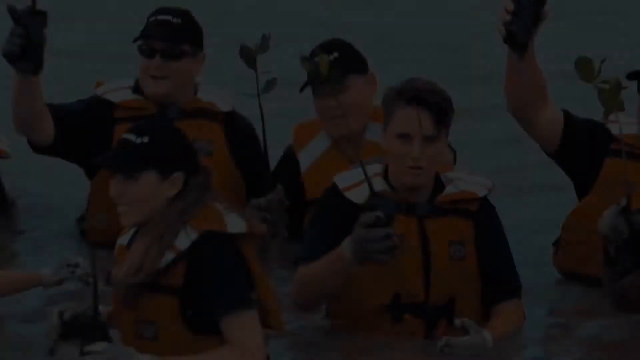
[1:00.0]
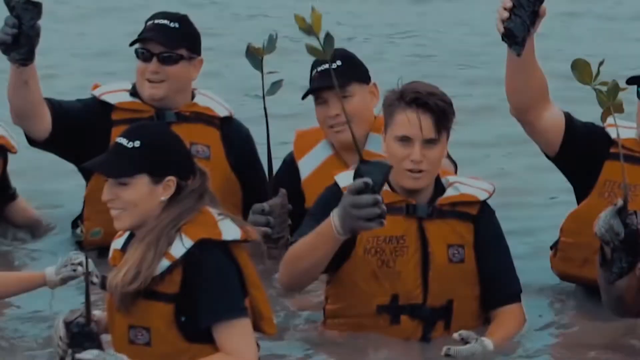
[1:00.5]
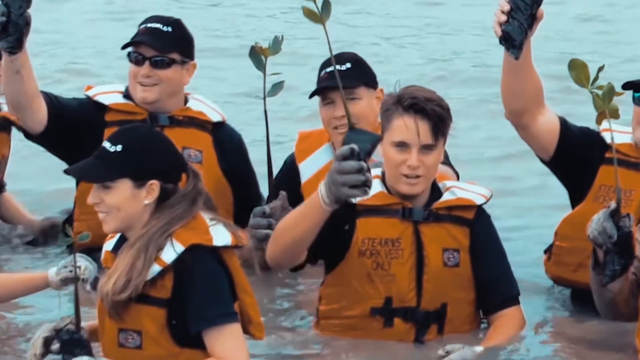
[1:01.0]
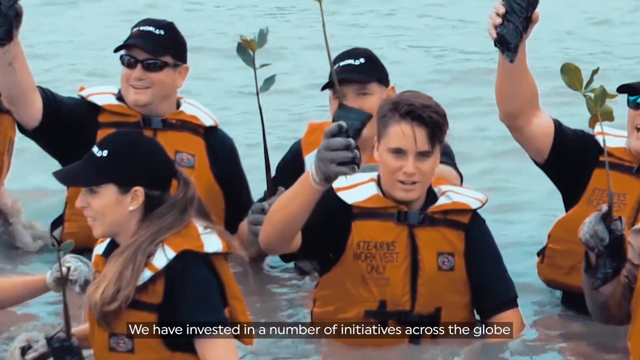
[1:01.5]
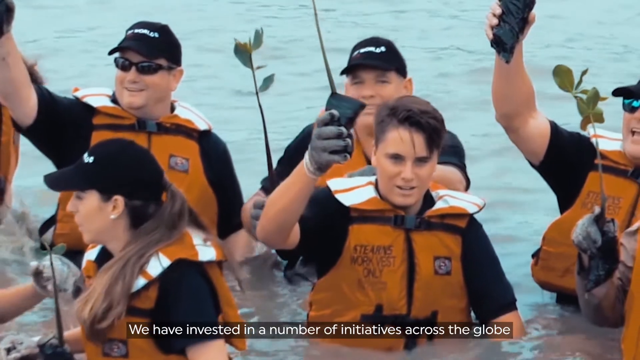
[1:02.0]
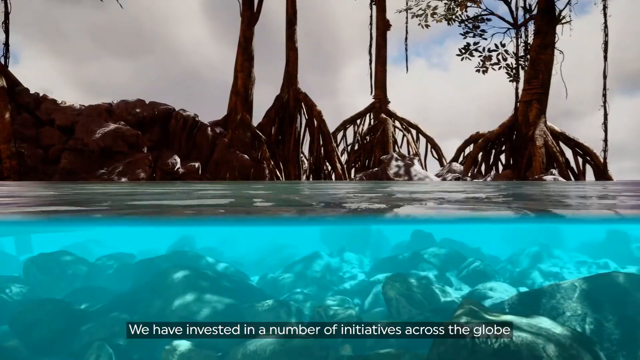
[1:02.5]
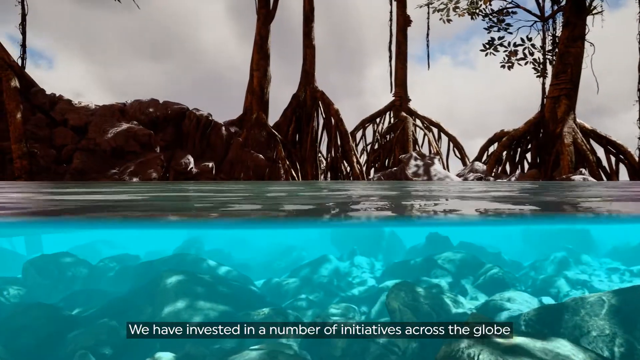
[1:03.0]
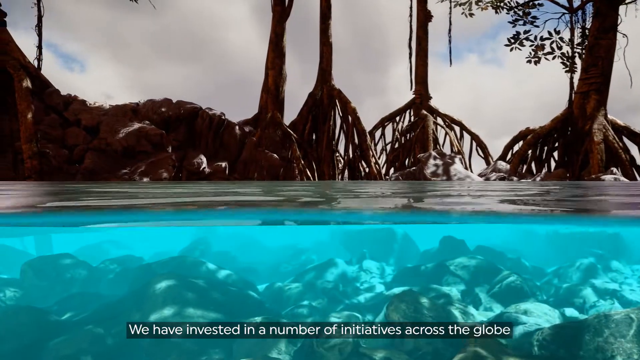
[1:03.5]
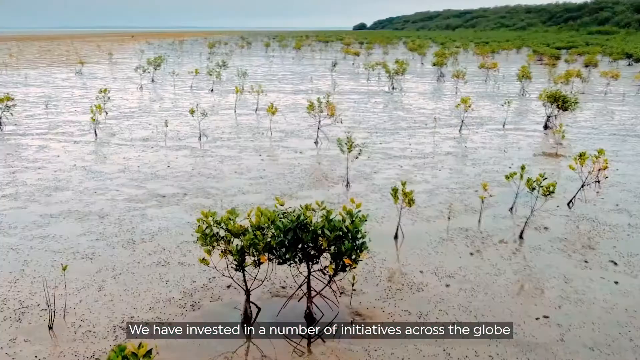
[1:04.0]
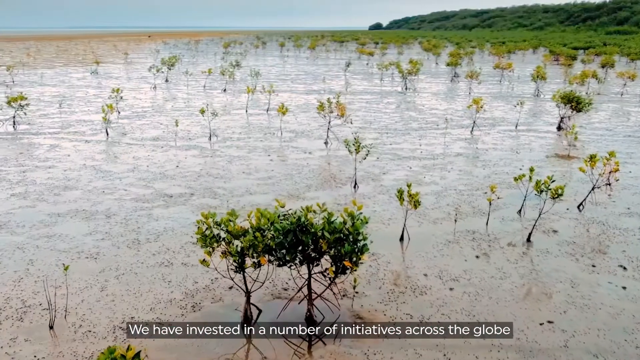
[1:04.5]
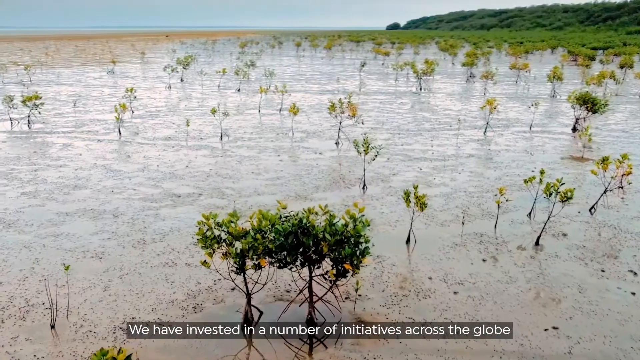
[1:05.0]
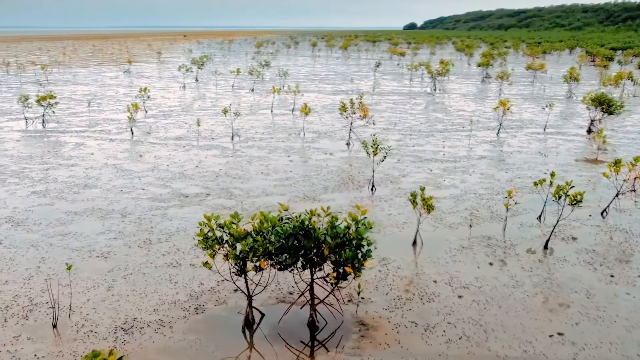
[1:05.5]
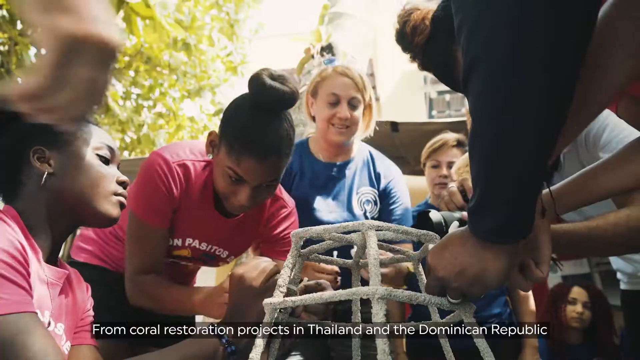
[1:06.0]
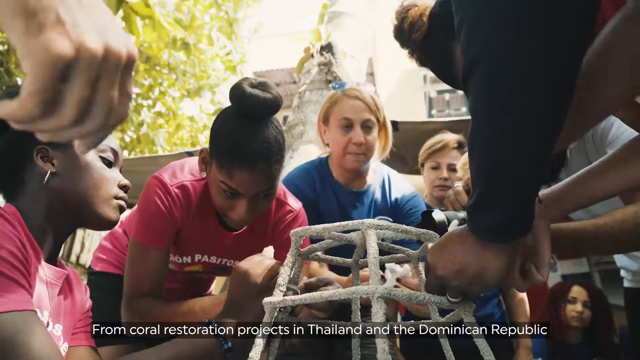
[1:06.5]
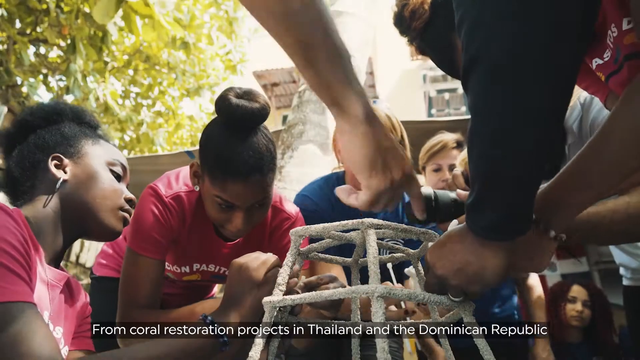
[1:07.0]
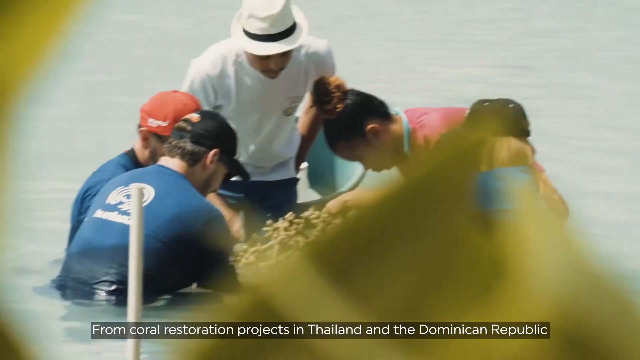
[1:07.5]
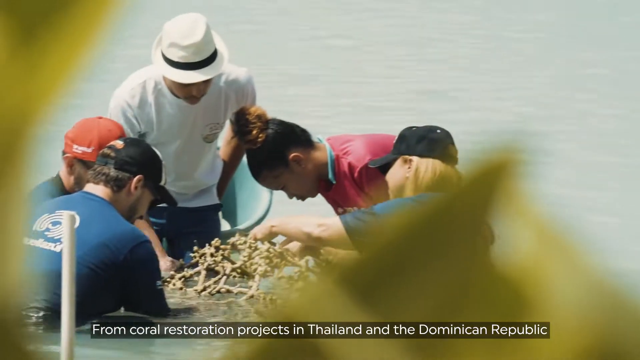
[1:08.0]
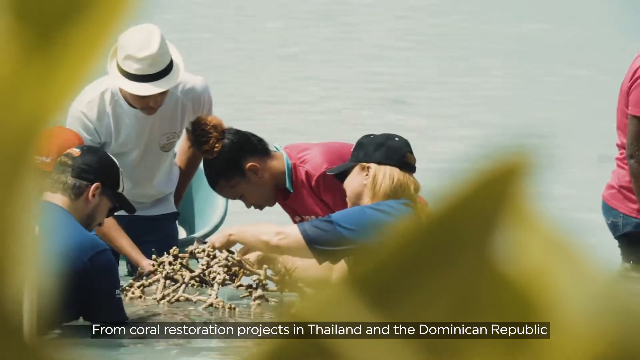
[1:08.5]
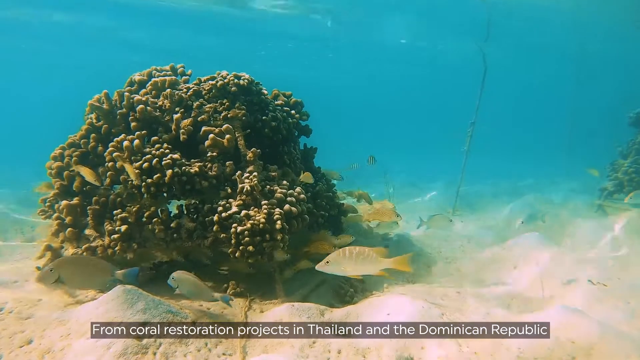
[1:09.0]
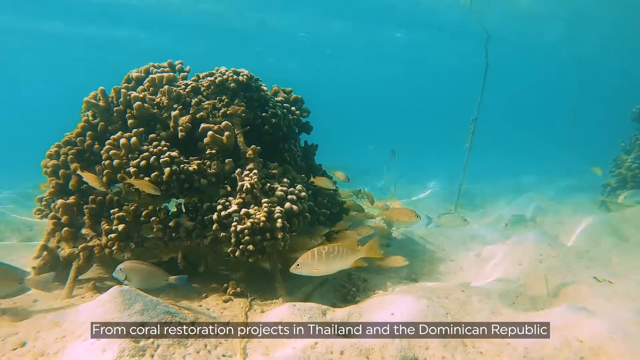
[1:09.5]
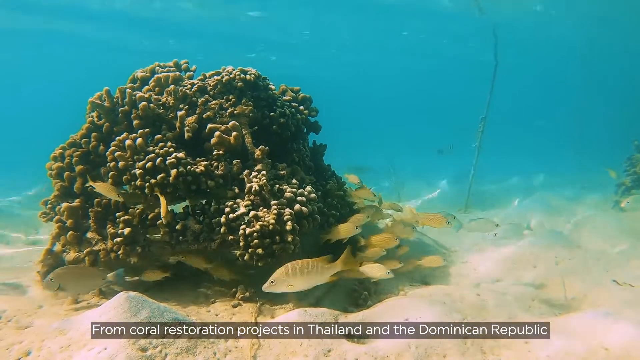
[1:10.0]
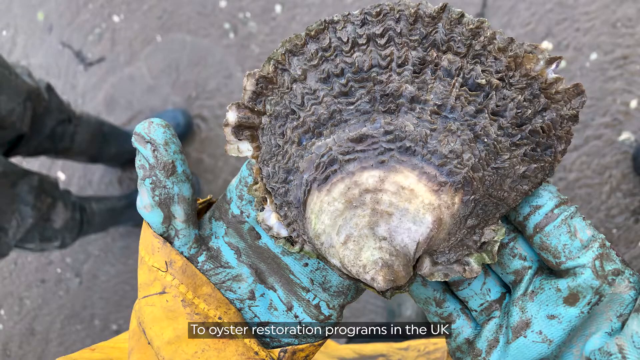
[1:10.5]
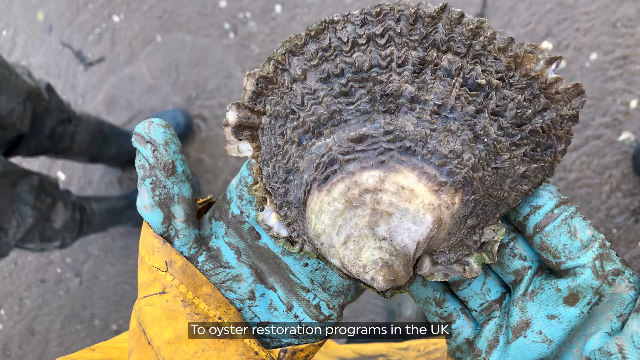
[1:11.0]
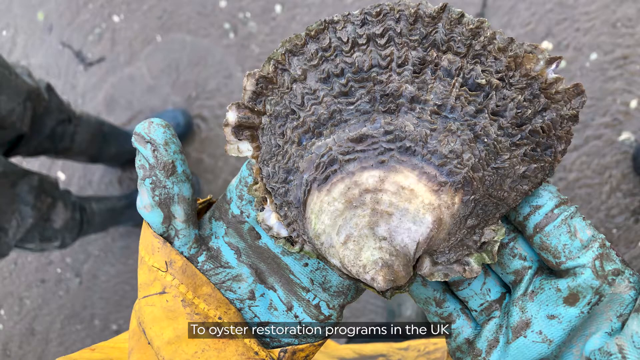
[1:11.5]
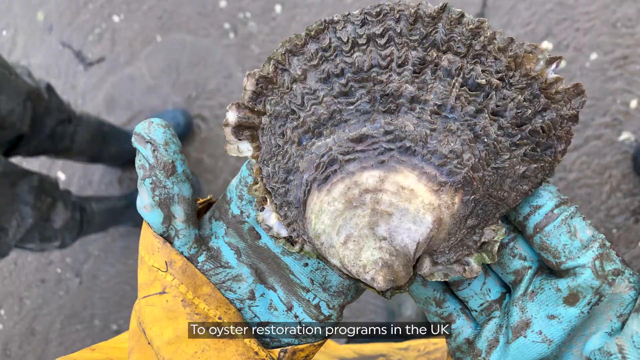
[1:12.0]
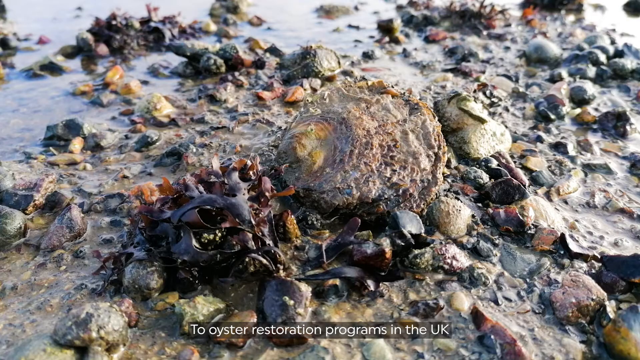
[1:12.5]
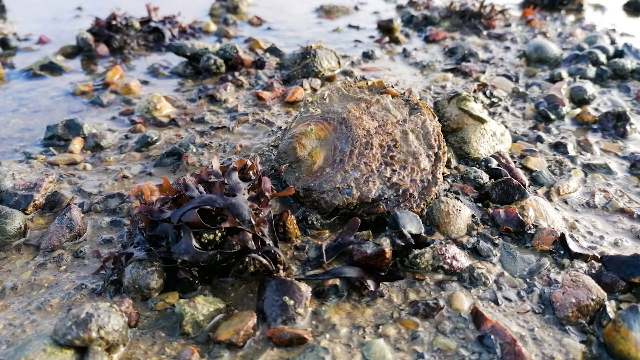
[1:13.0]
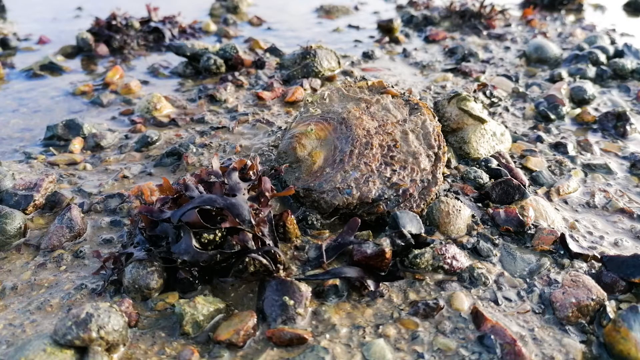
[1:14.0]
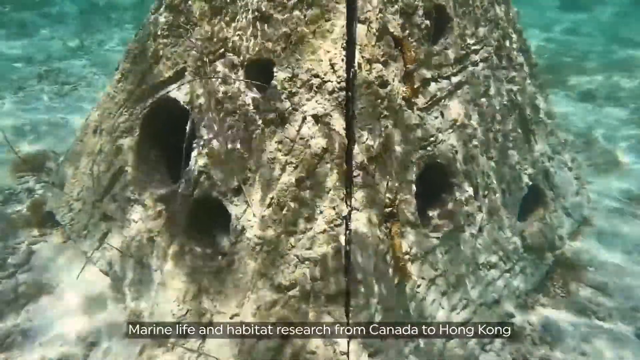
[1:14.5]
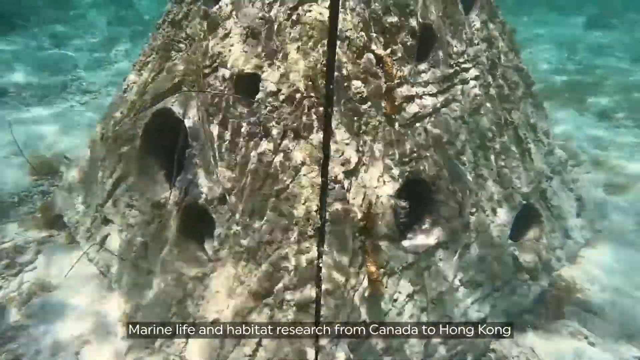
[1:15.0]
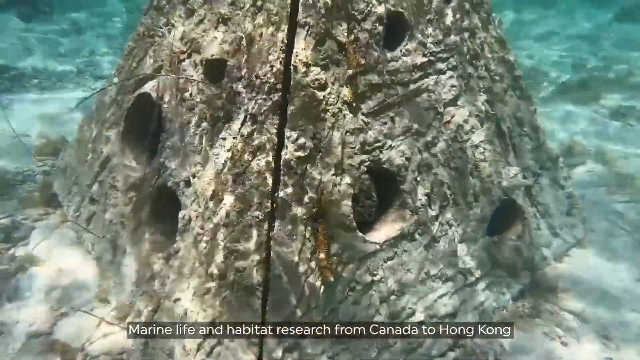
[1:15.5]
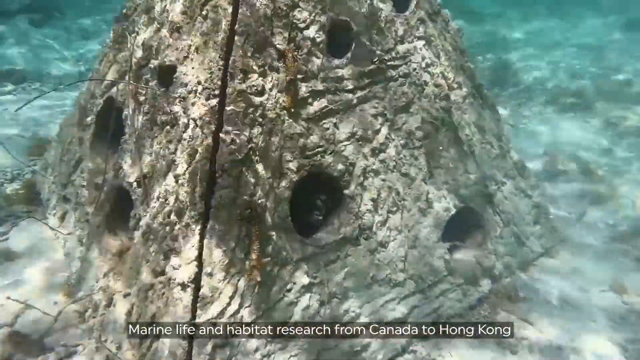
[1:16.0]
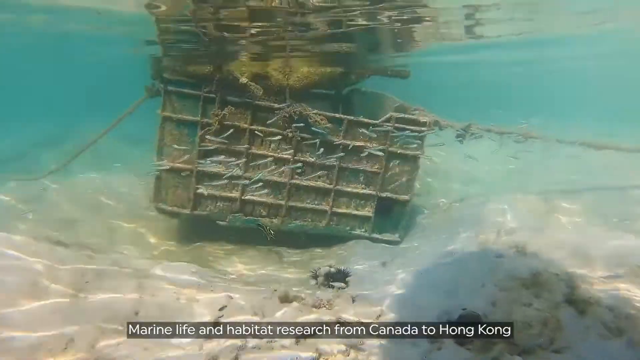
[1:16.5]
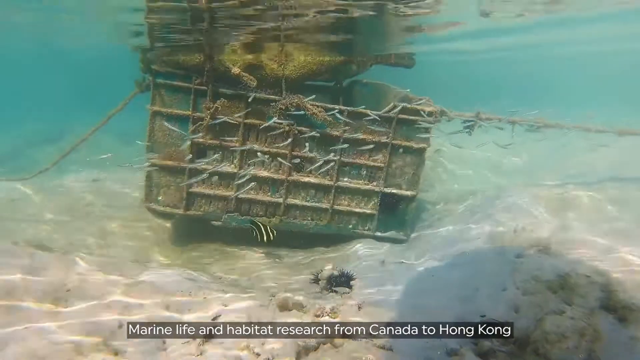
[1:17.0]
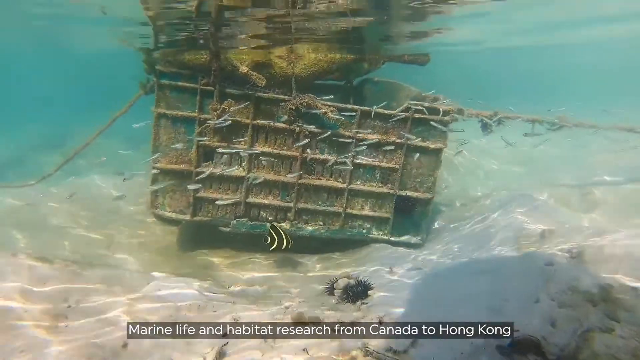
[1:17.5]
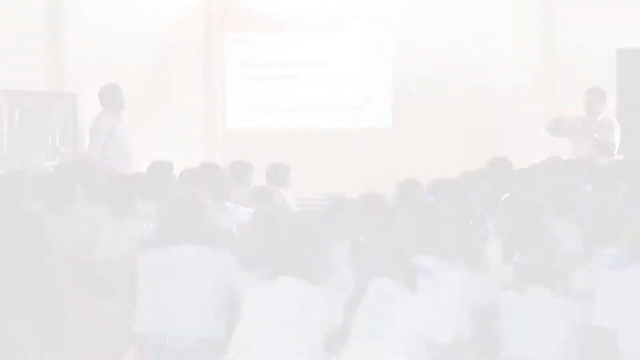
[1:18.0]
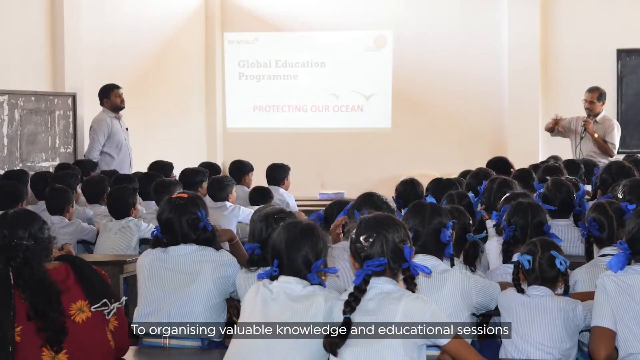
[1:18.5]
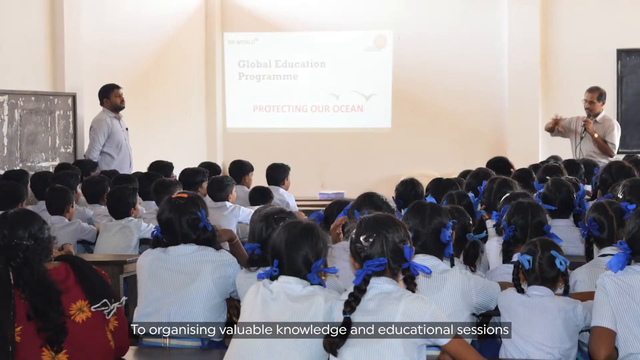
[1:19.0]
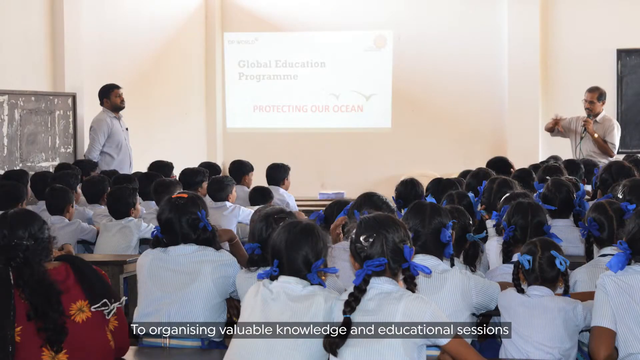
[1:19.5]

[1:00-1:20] Quickly changing stills and video shots about the coast and the sea continue. A group of people wearing life jackets in the sea hold up the plants previously seen in the tubes, raised in their right hands. Next is a mangrove swamp with mangrove trees, many roots and moving water, shown as if sliced in half so that both the underwater view and the mangroves are visible. This switches to trees on a salt plain, then to six people studying a net, which a man is holding; four people then look at the net, trying to see what is inside it. A small coral reef follows, with fish seeming to swim around it in a clockwise direction. Next, a giant clam, a huge shell, is held in someone's outspread hands at the top right of the picture, while to the left only someone's wellington boots are visible. Several shelled creatures follow in quick succession in both still and moving shots, one with holes through which something can be seen moving inside. A shipwreck is shown as if sliced down through the sea, with fish swimming around it. Finally, a classroom appears with a whiteboard, two teachers and a group of children who seem to be learning about the sea.